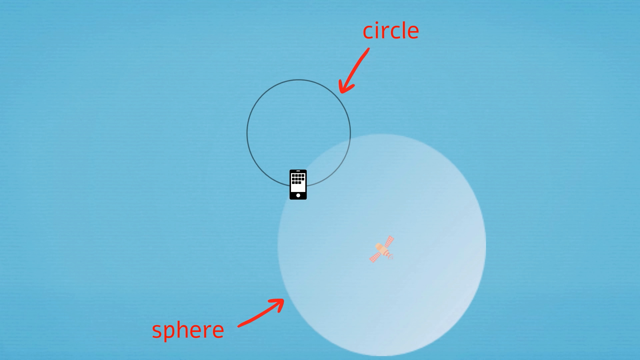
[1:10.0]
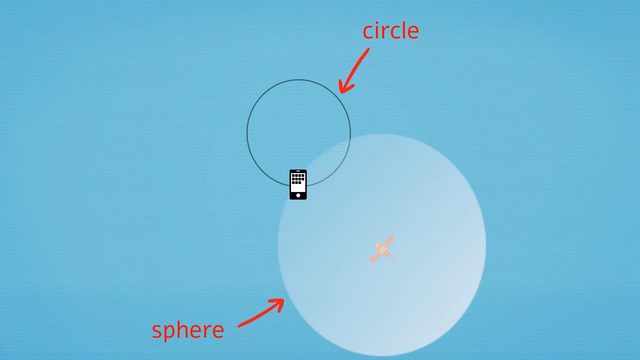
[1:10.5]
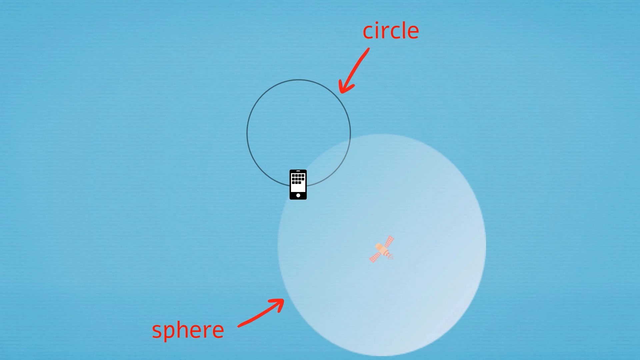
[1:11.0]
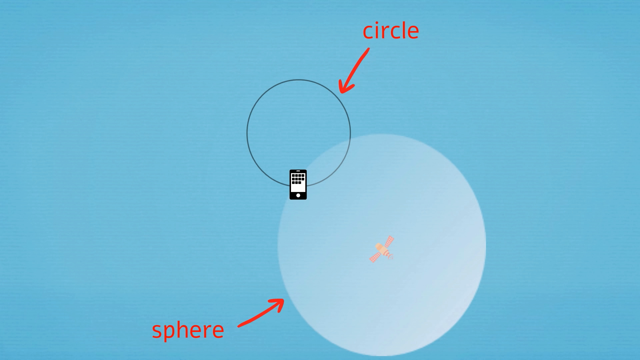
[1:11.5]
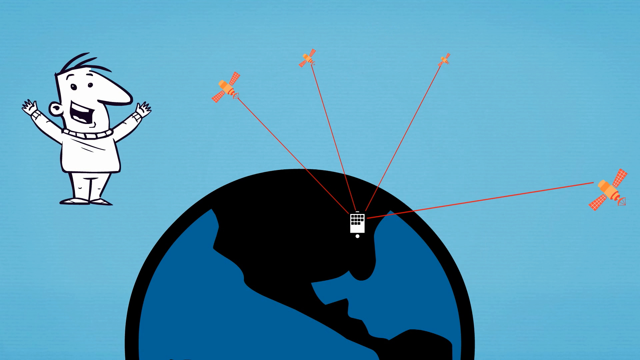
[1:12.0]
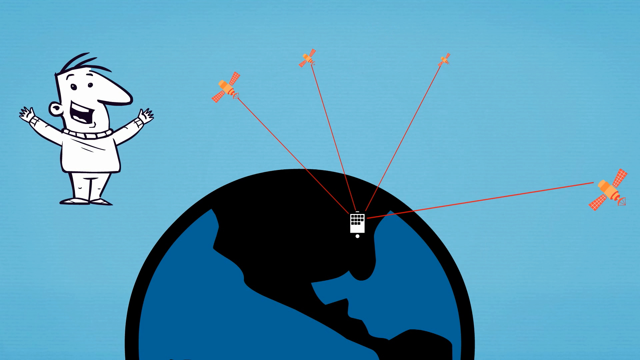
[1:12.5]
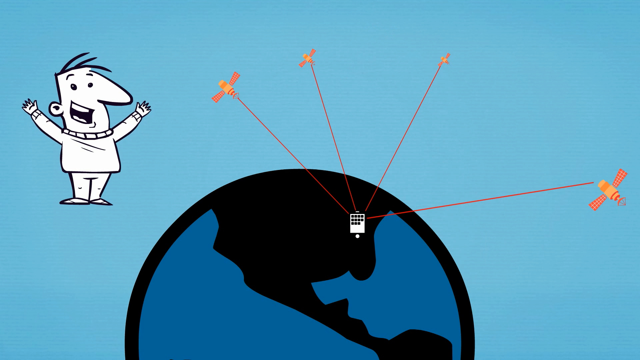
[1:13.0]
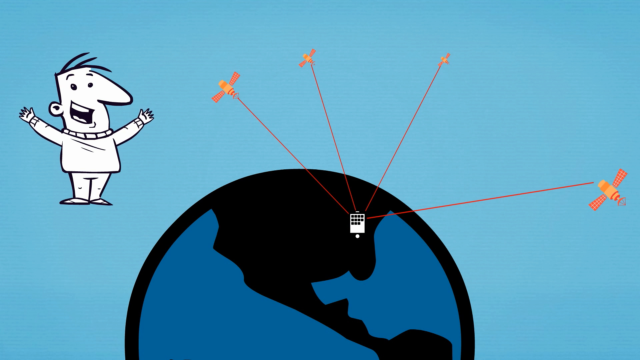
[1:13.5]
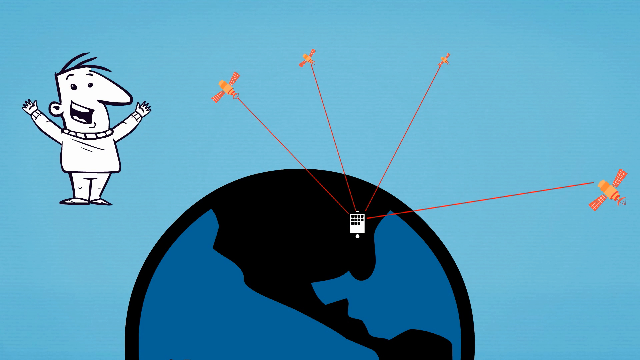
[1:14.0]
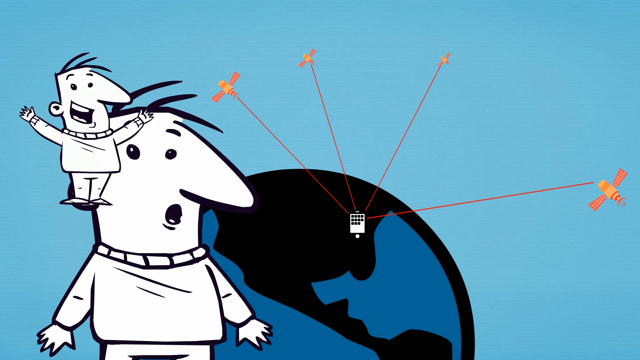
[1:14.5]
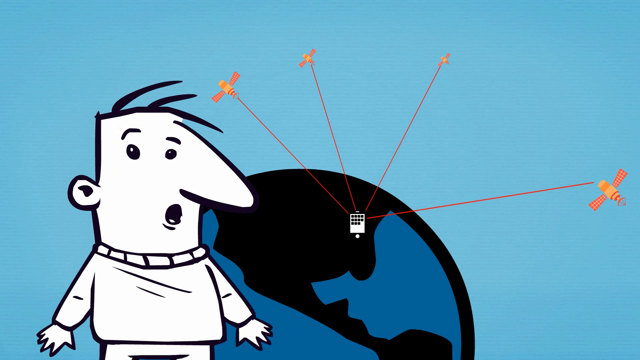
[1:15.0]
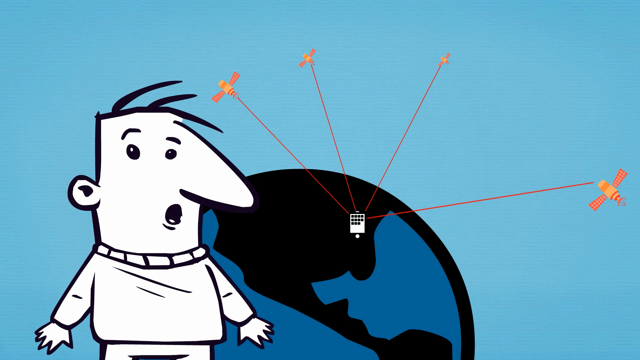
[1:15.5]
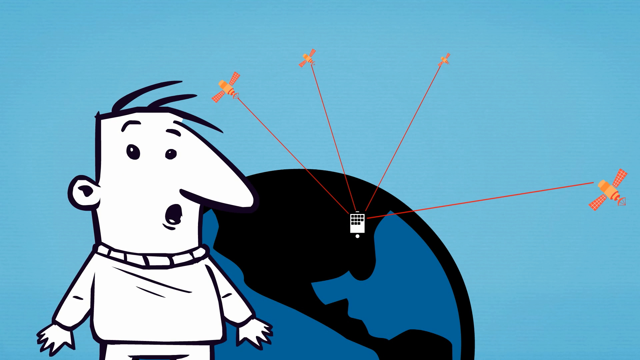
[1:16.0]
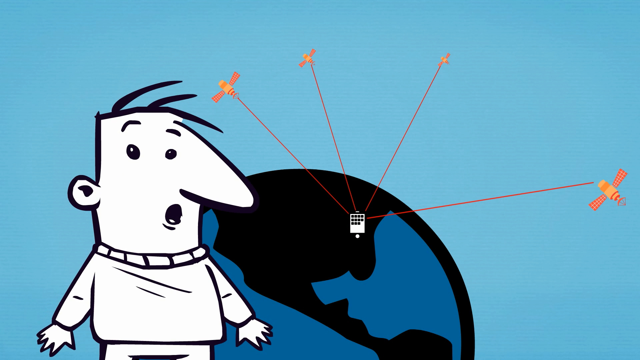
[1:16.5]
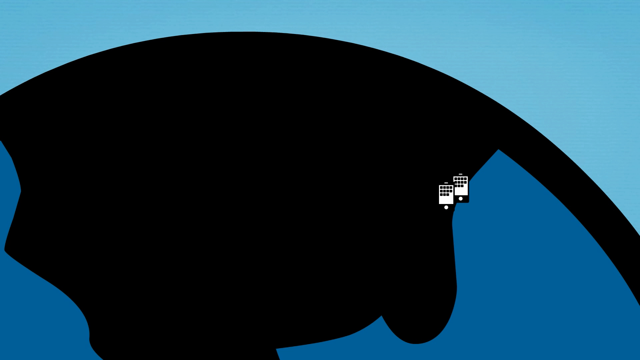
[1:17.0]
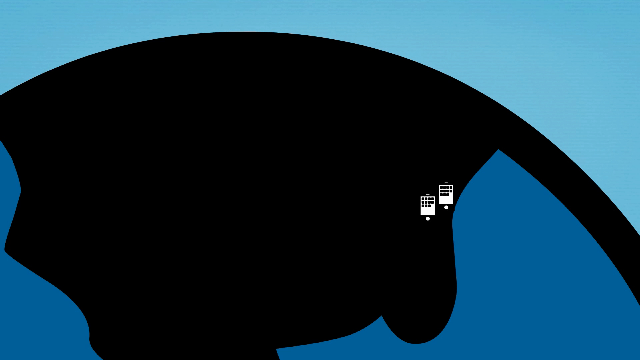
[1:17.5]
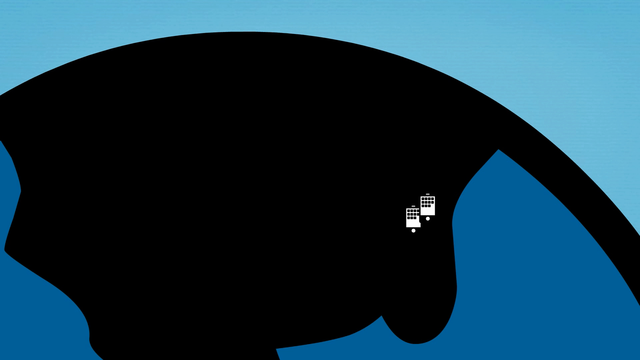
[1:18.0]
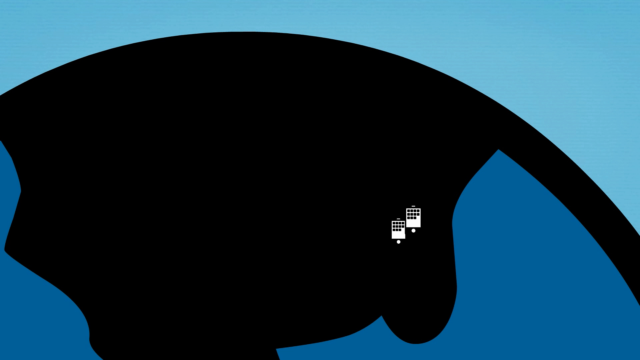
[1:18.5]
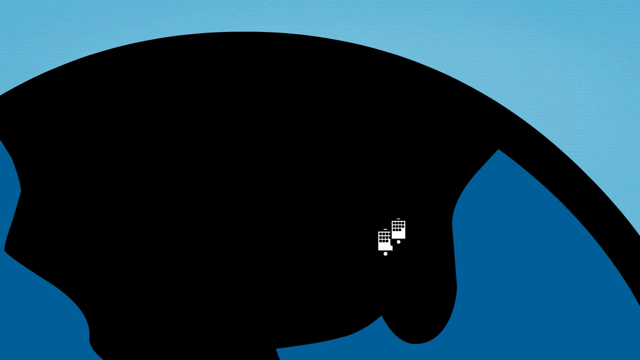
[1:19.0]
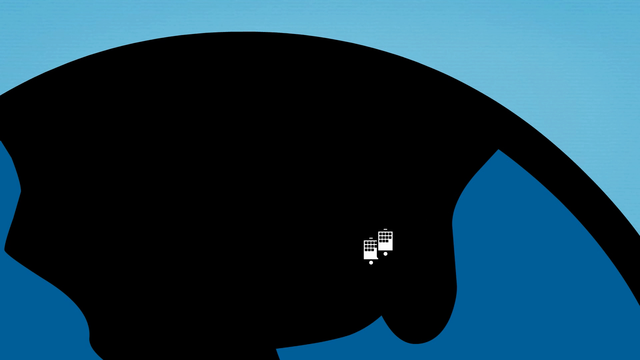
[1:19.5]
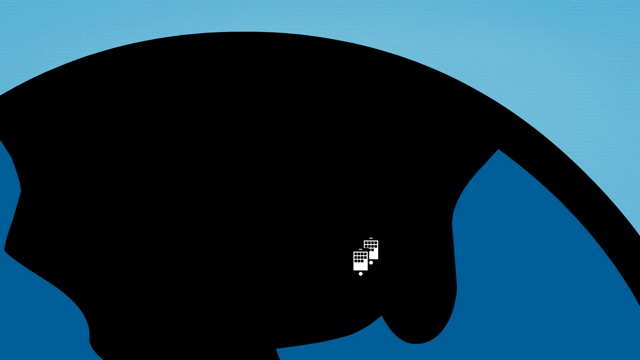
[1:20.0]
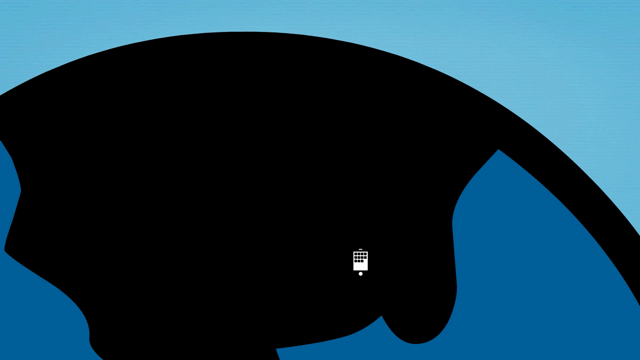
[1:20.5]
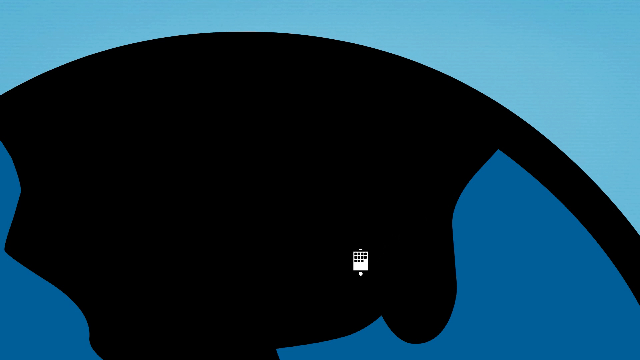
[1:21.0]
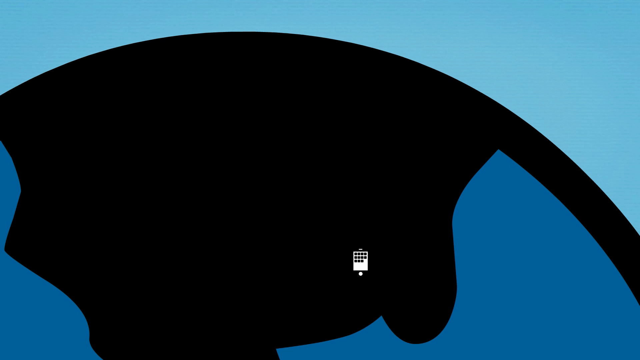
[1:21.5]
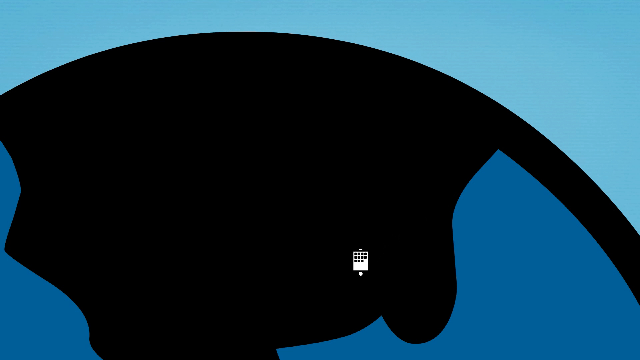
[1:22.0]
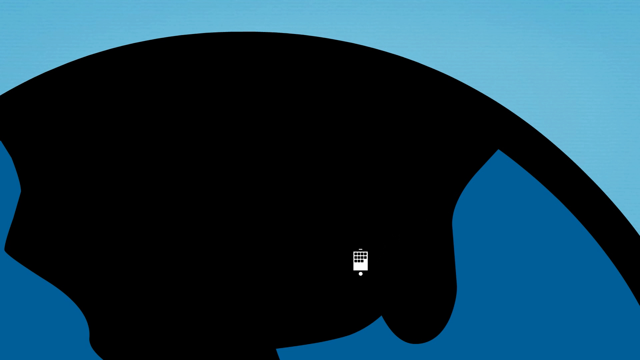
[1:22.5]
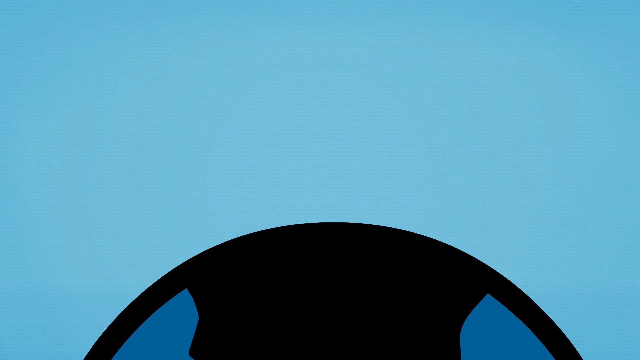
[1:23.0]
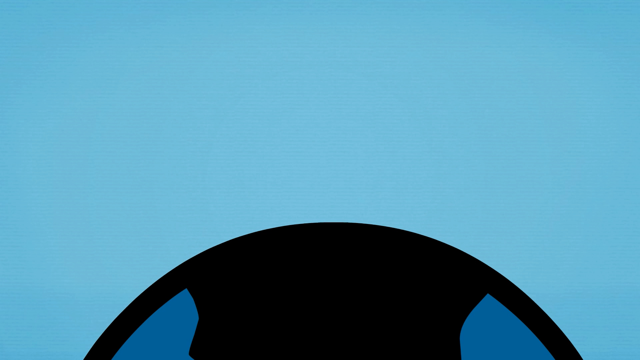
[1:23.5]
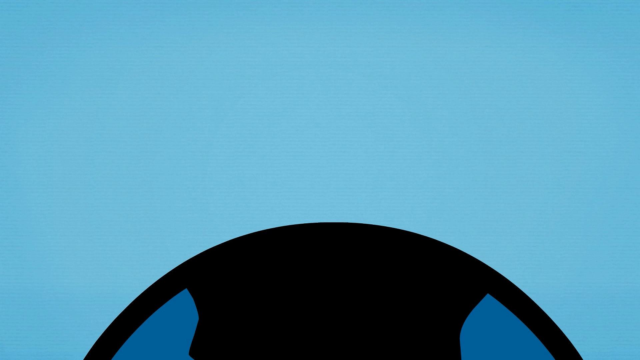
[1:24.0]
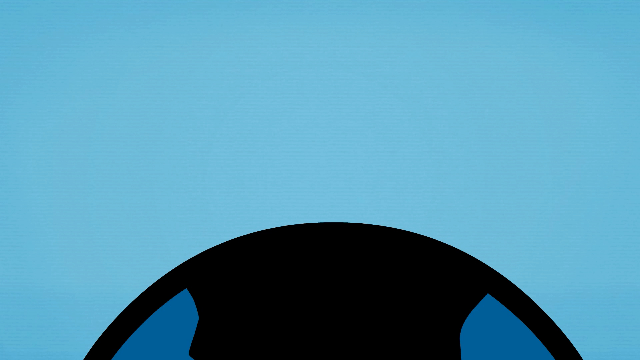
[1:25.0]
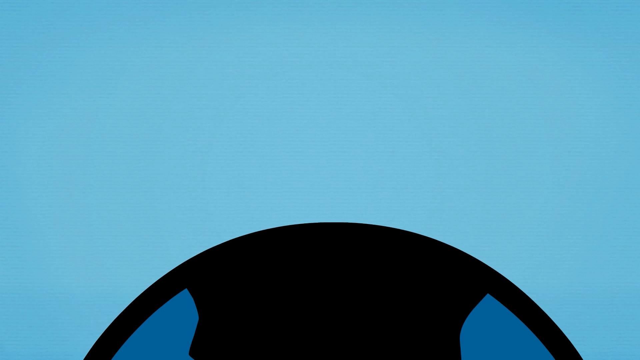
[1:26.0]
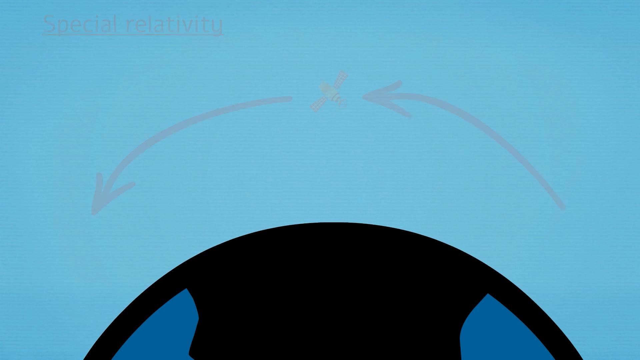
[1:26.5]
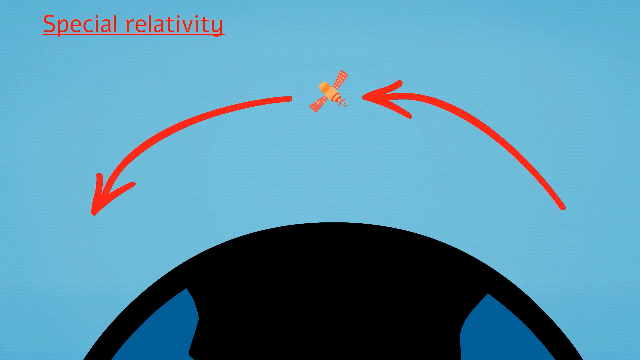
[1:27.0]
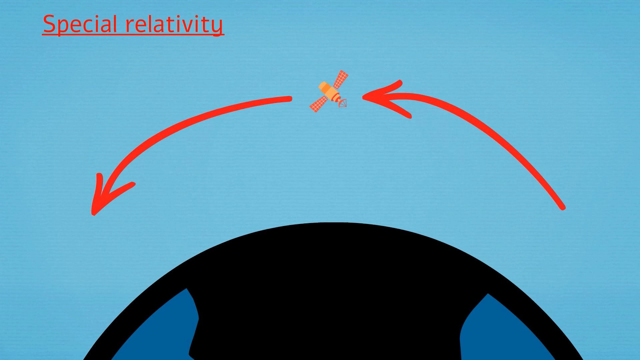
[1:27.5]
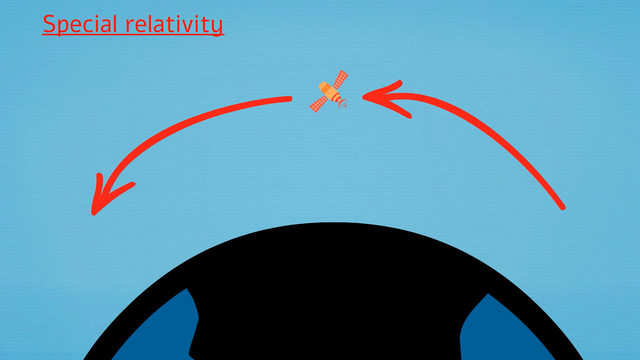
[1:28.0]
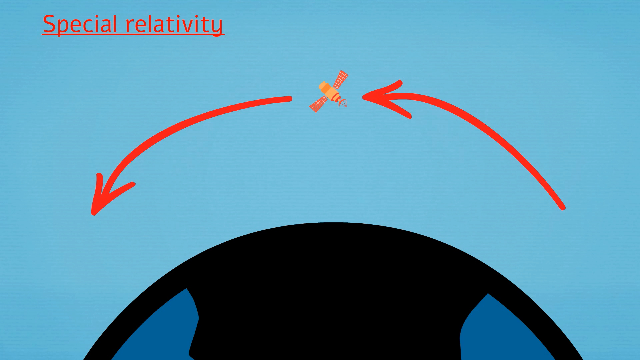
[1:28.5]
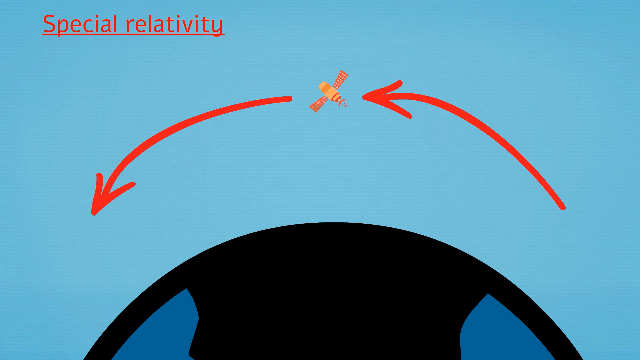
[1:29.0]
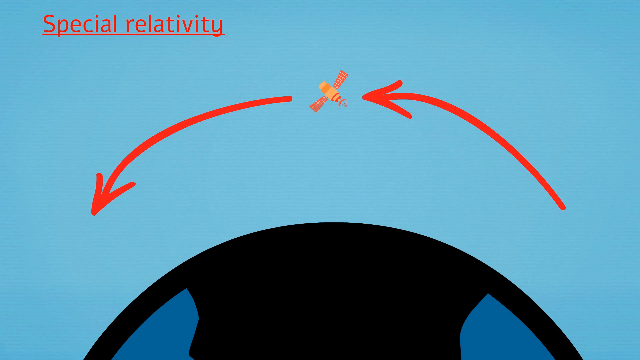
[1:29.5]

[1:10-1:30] Another line circle is at the top left of a white sphere, which is larger than the line circle. Red text says "circle" with a red line pointing to the line circle, and red text at the bottom of the screen says "sphere" with a red arrow pointing to the sphere. The orange satellite is in the middle of the white sphere. Two iPhones on the line circle, at the bottom and on the left, appear and disappear. The next screen shows an animated cartoon man at the top left, happily waving his arms, with the planet in the bottom half of the screen. The black planet has blue land, and at the top of but inside the planet is what looks like a cell phone, attached to four orange satellites up in the sky: one to the left, two at the top, and one to the right. The animated man suddenly appears larger and in front of the screen, looking bewildered. The animation then shows the planet covering most of the blue screen, with two iPhones slowly moving down the planet to the bottom of the page. The next screen shows the planet in the bottom half of the page on the blue background, with red arrows and the satellite at the middle top of the page, attempting to move around the planet.